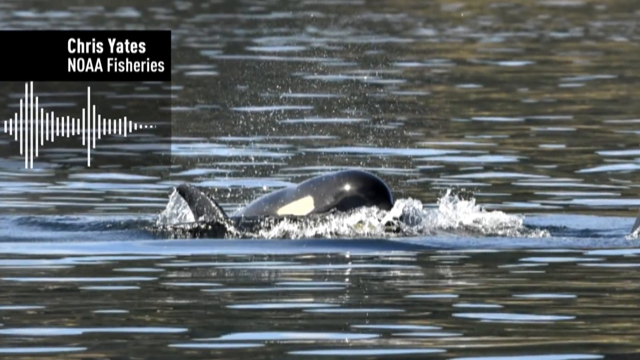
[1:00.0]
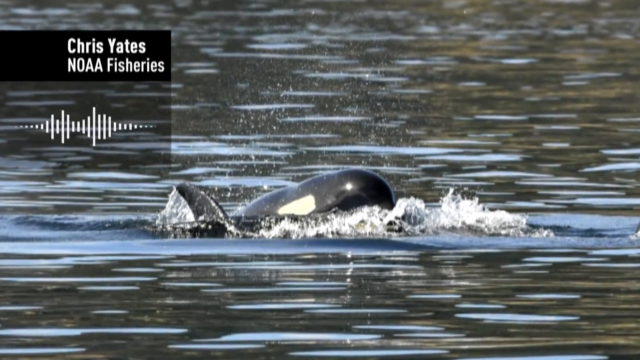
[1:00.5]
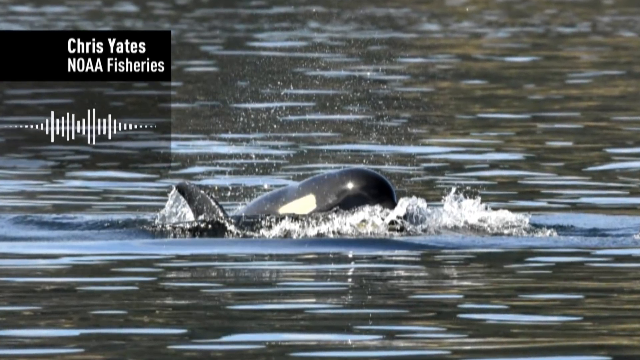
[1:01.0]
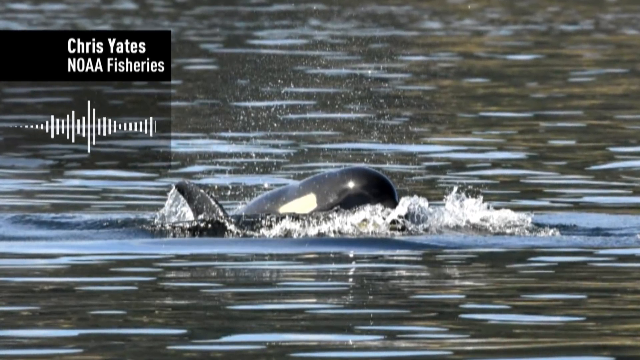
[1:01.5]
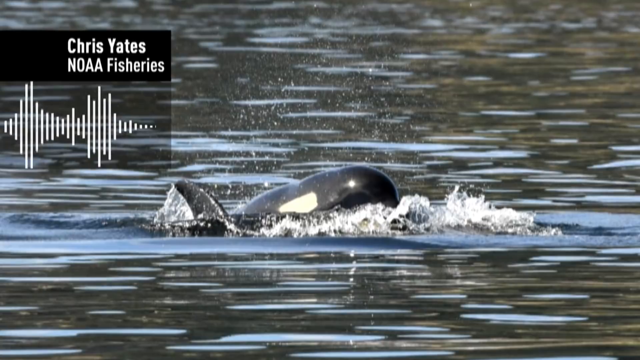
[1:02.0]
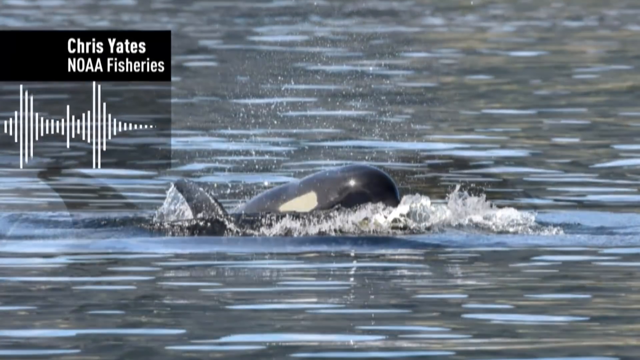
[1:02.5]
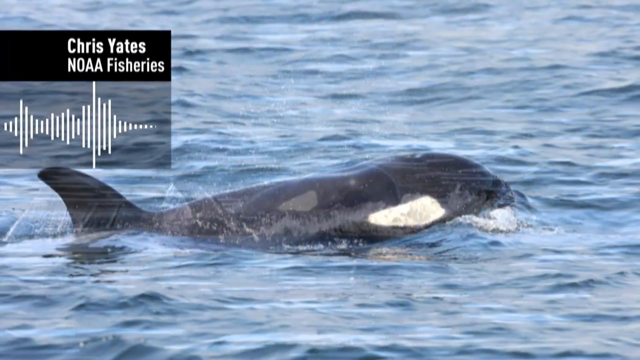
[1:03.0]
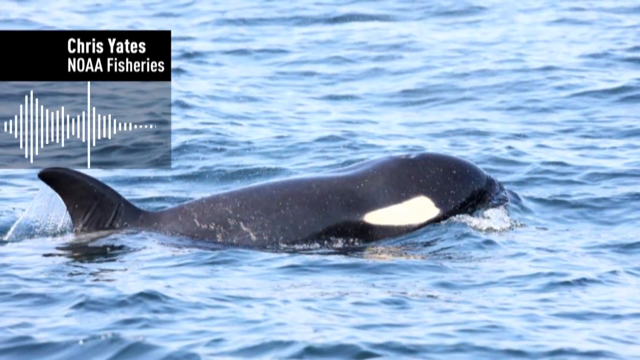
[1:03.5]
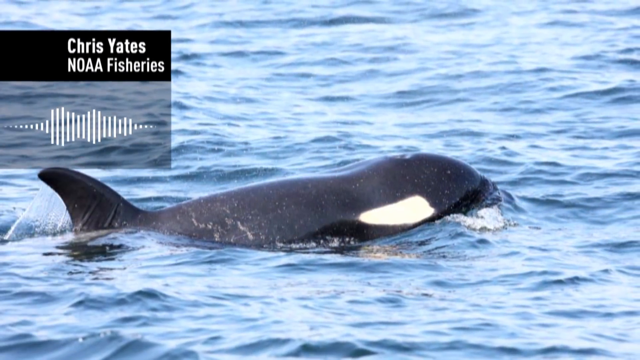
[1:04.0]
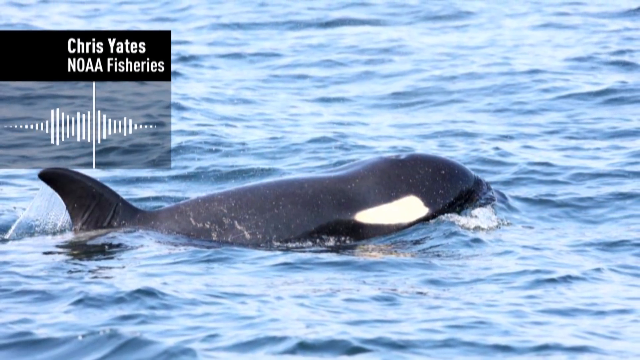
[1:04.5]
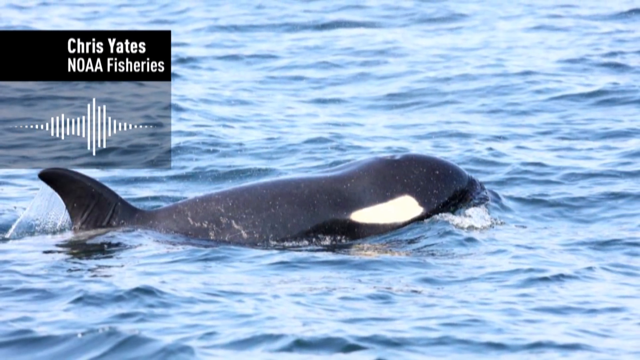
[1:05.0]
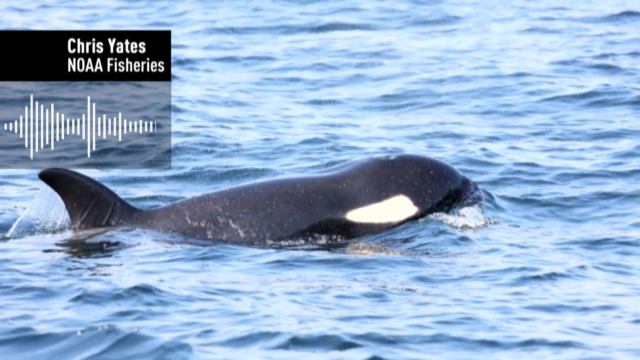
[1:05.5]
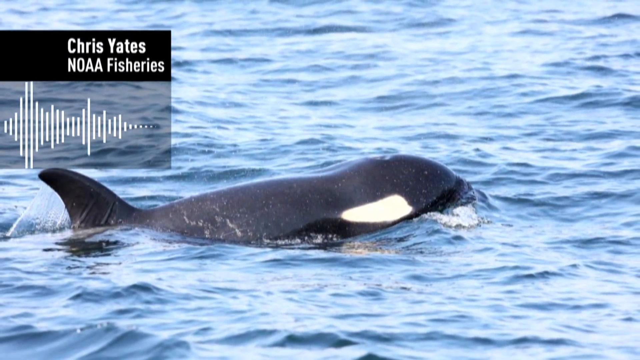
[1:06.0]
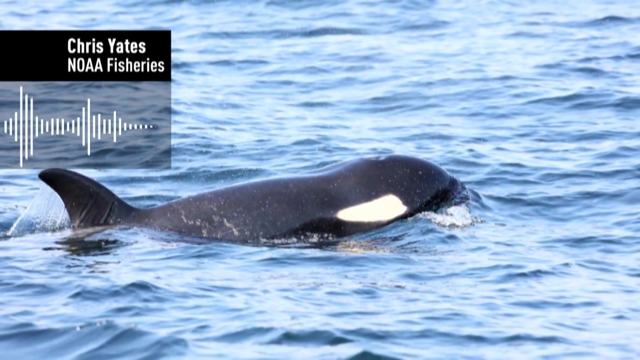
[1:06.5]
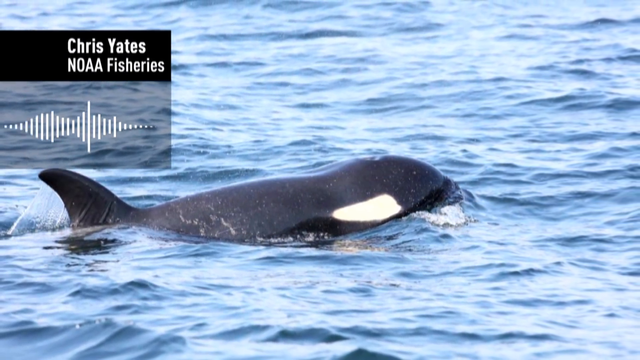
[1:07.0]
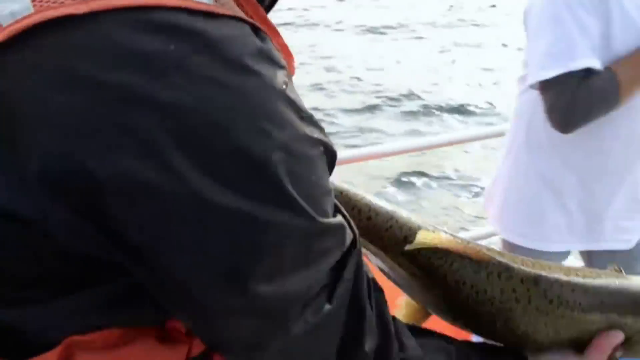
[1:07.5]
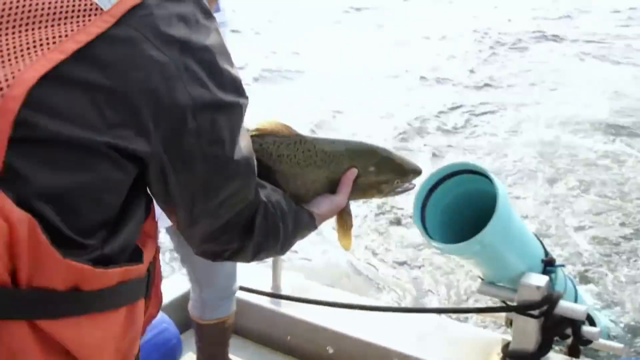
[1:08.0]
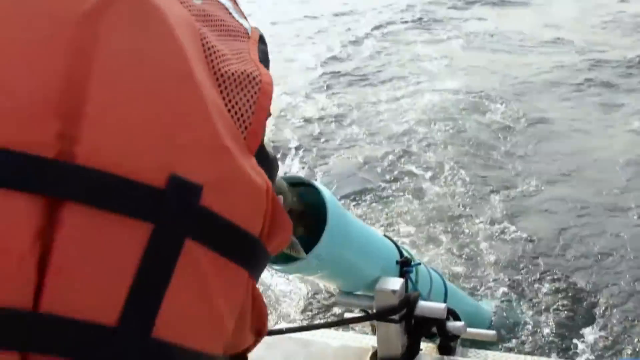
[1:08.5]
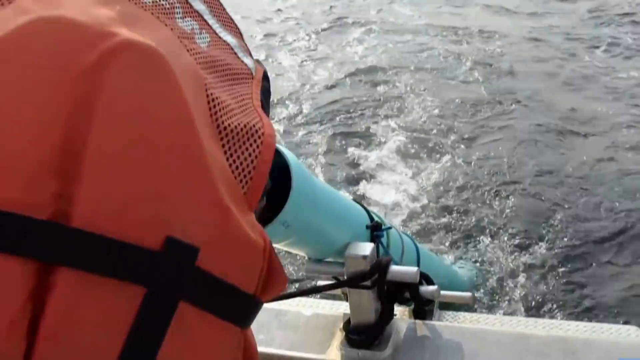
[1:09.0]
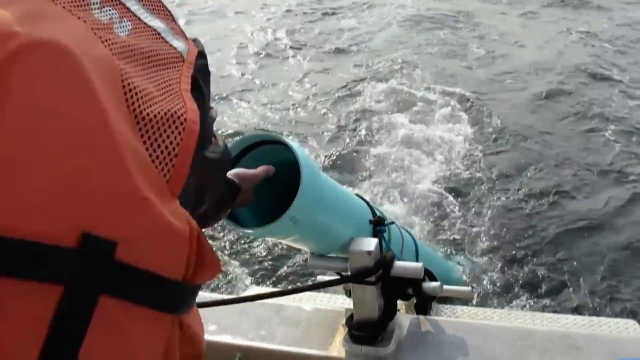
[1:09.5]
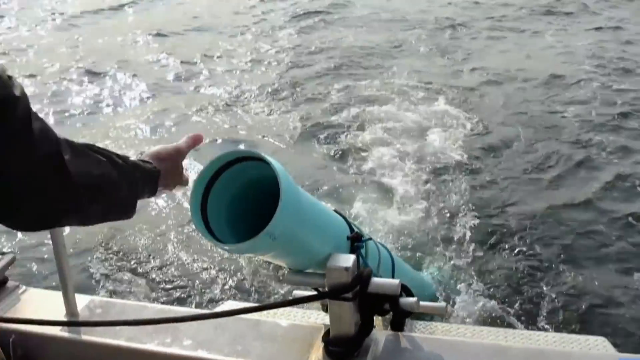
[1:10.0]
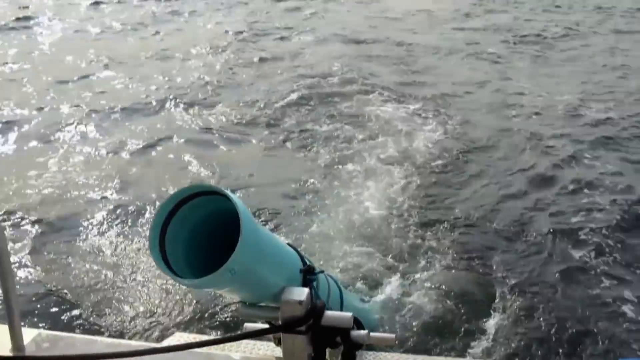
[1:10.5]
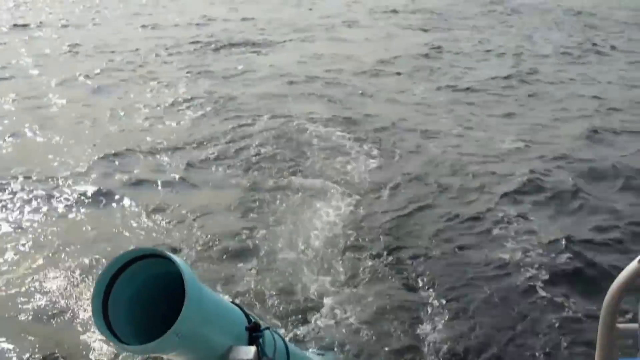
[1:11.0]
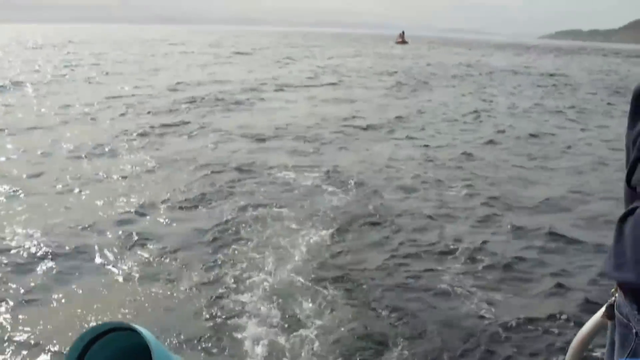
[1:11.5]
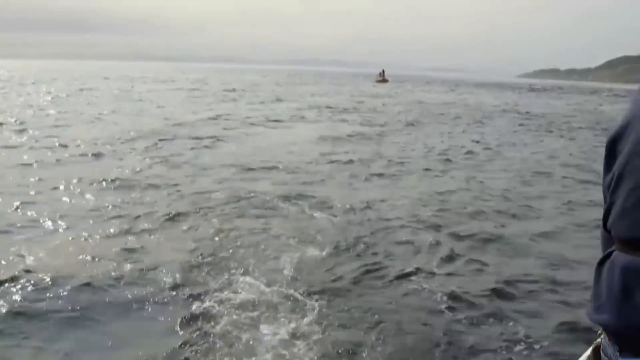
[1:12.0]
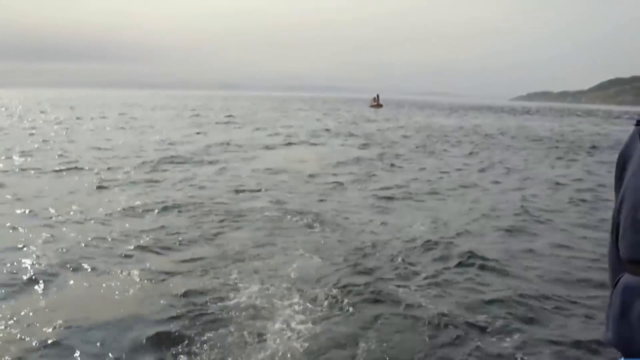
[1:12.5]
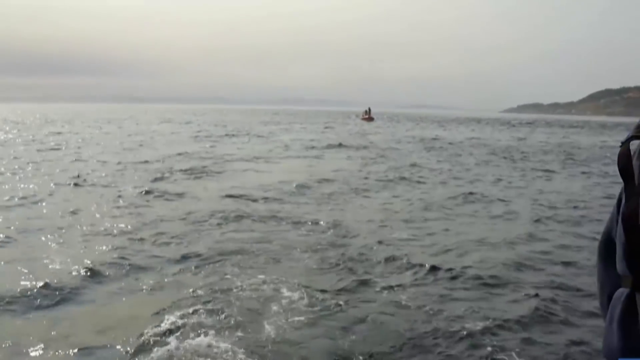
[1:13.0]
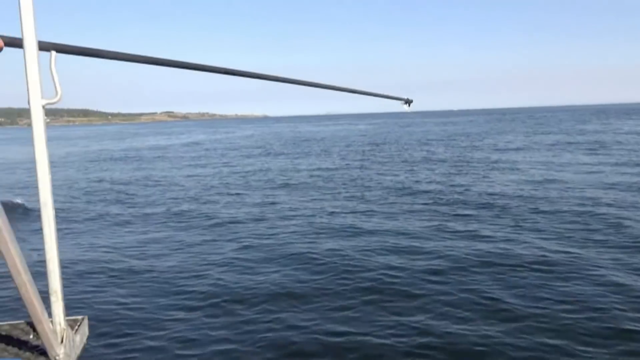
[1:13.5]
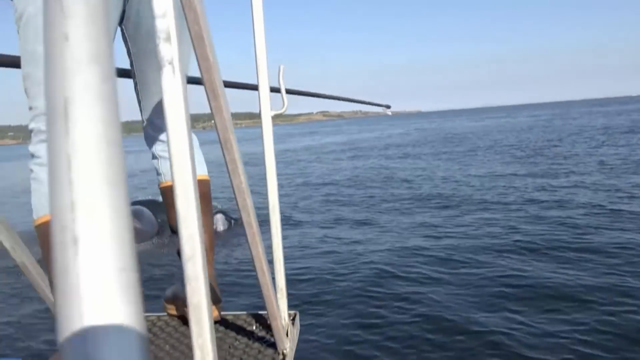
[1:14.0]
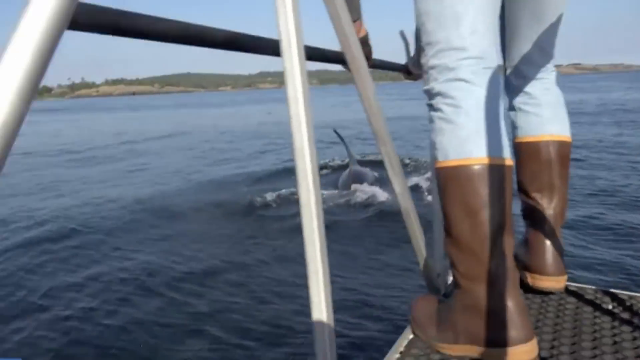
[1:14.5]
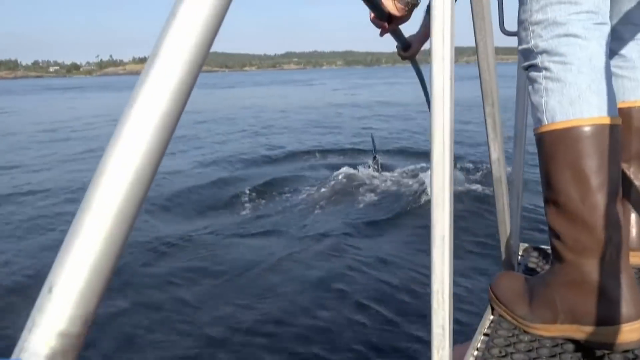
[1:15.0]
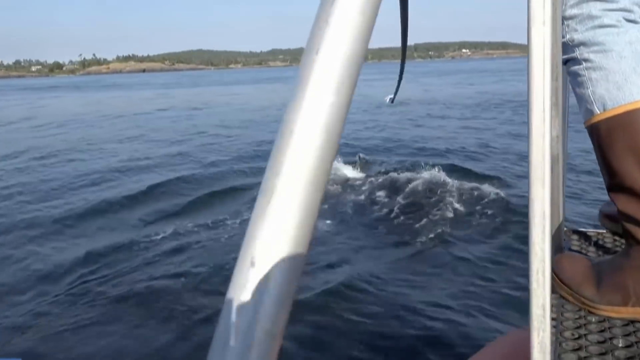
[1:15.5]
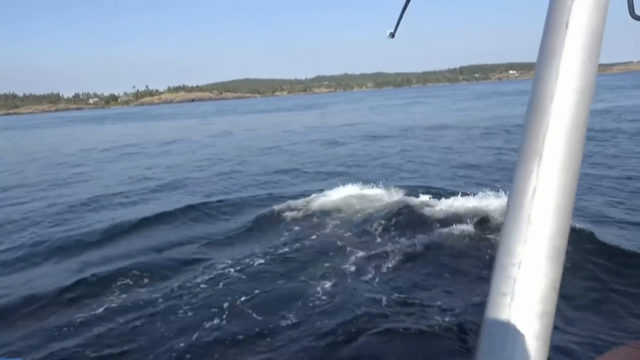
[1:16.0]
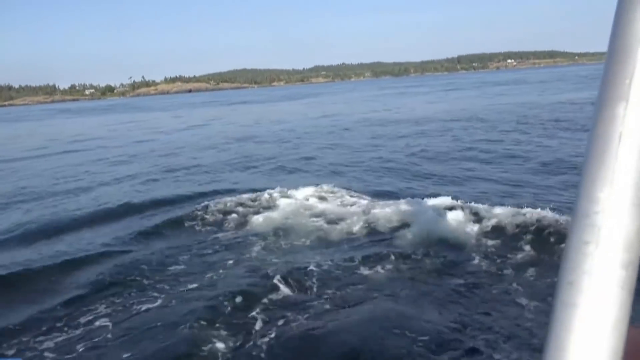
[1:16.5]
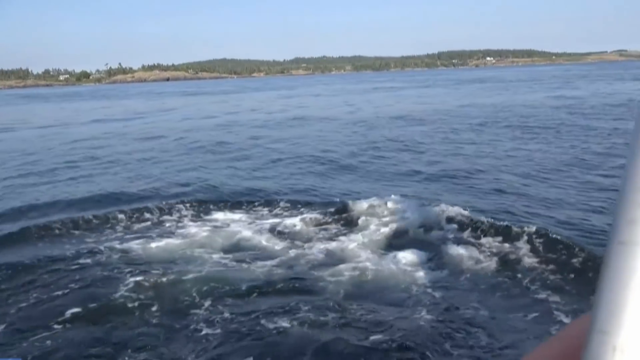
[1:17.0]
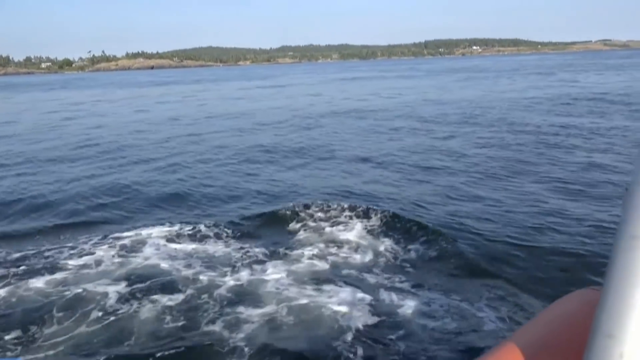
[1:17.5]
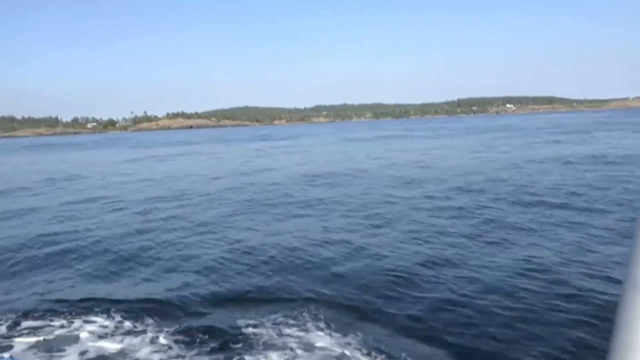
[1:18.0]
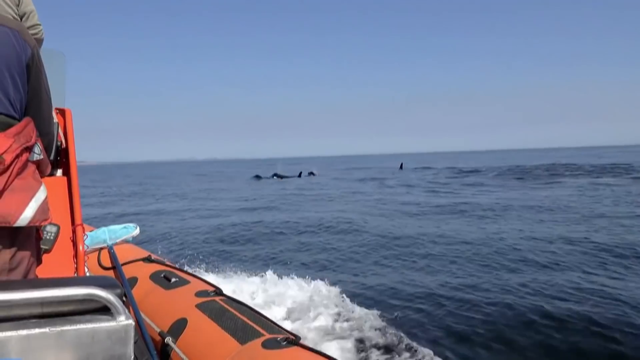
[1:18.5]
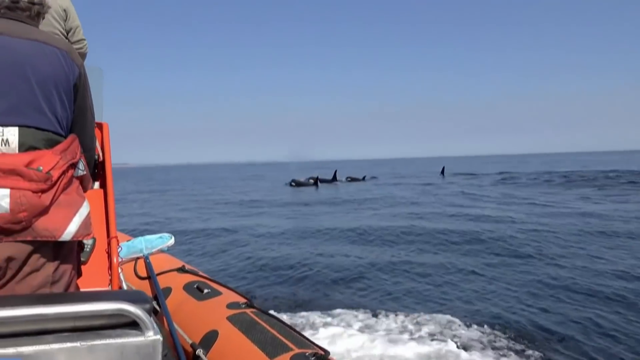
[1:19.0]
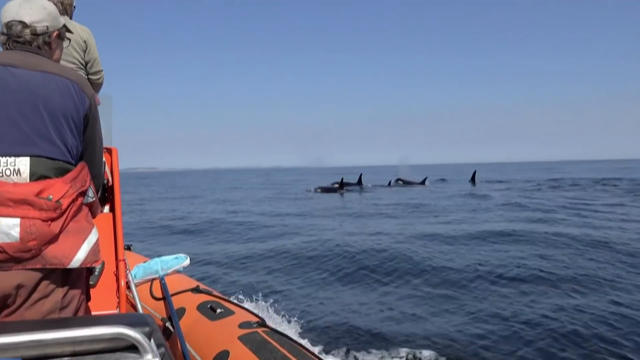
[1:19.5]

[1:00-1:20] The people on the boat look like they are also fishing as they drive in the direction of the dolphins. The dolphins, apparently still three of them, are now seen from a bit of a distance as they keep swimming, as if the boat has moved away from them. A close view of a dolphin shows how dark, almost black, it is. Men on the boat have just caught a fish and seem to be putting it into a white pipe-like thing attached to the boat; it is unclear whether they are returning it to the water or keeping it there.